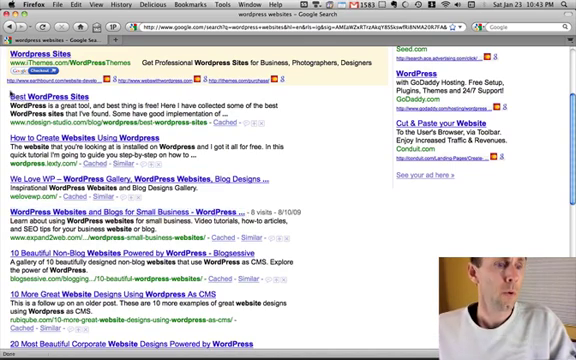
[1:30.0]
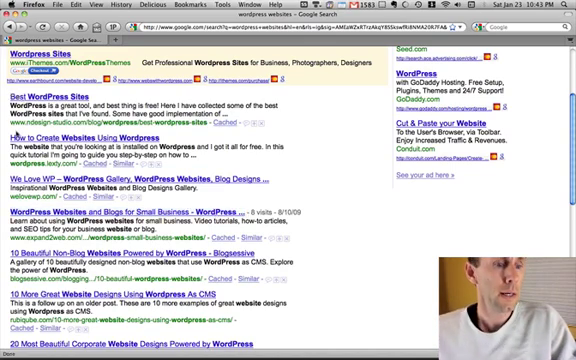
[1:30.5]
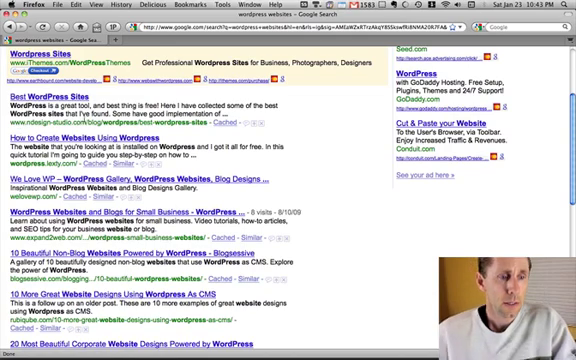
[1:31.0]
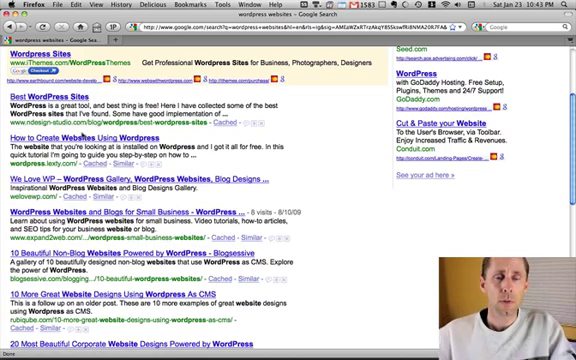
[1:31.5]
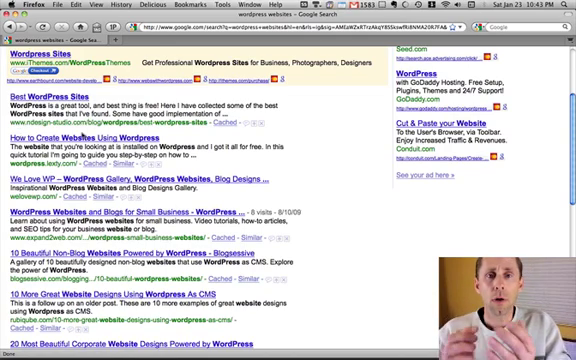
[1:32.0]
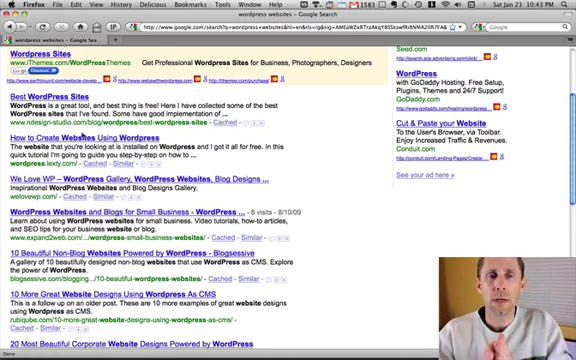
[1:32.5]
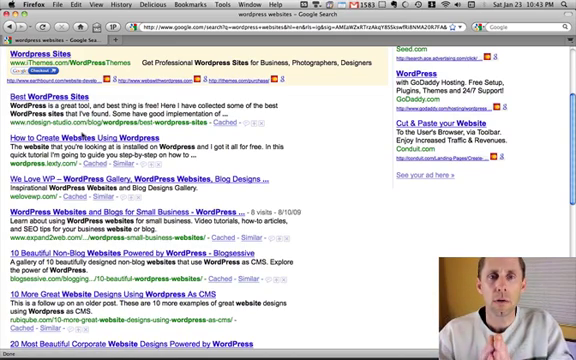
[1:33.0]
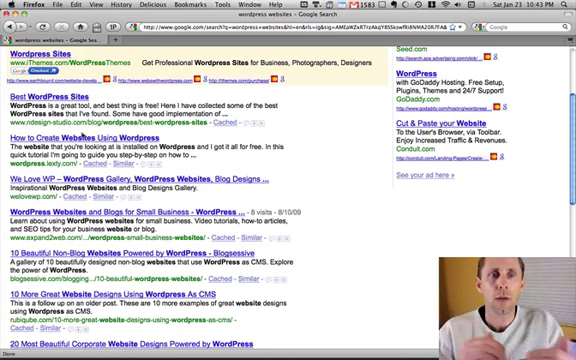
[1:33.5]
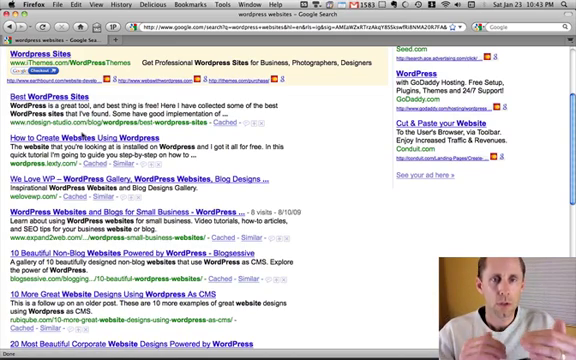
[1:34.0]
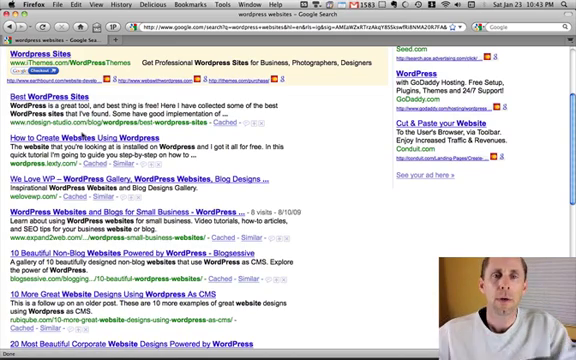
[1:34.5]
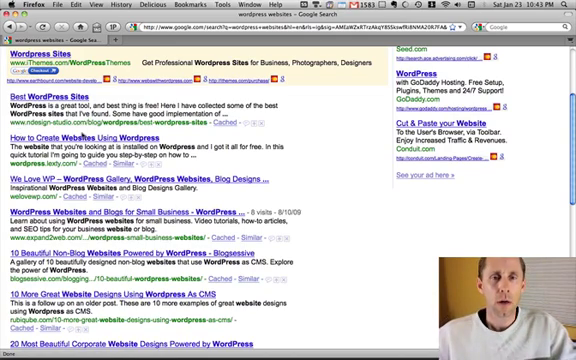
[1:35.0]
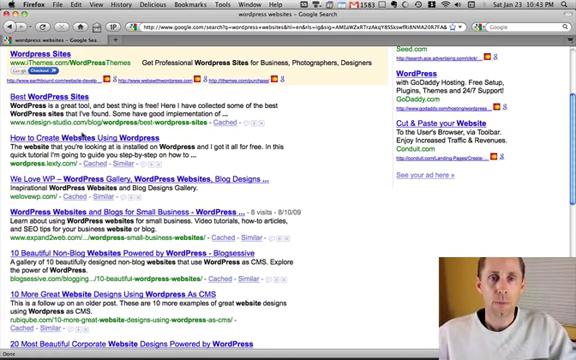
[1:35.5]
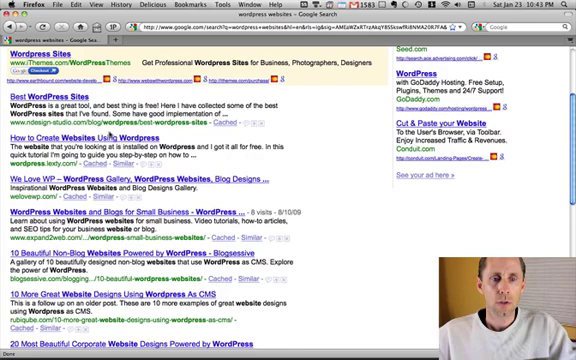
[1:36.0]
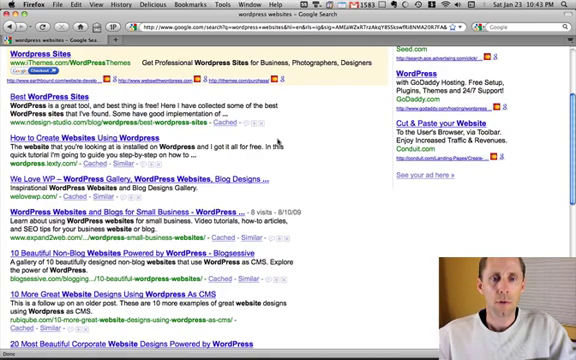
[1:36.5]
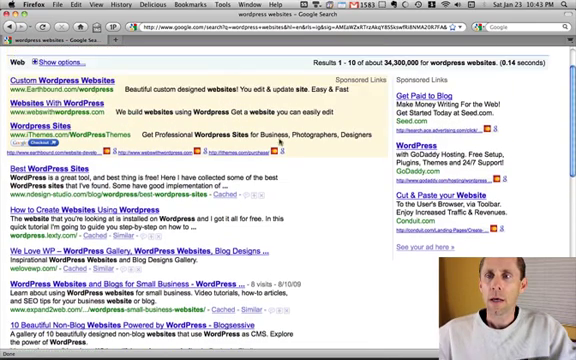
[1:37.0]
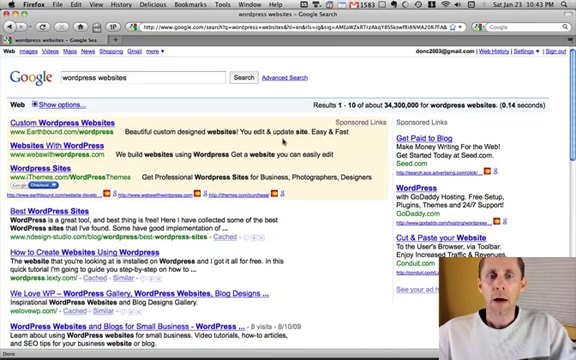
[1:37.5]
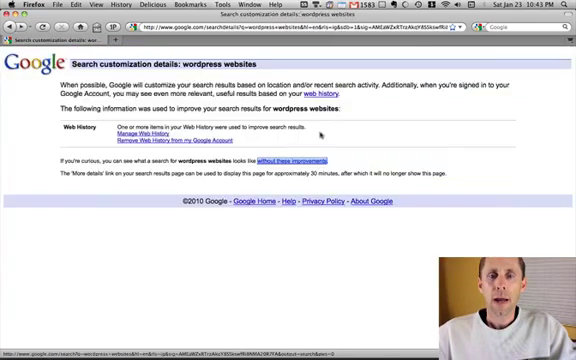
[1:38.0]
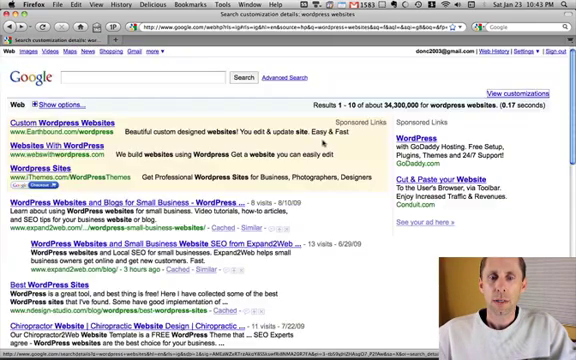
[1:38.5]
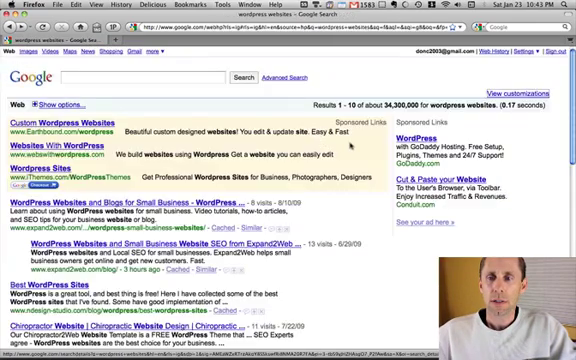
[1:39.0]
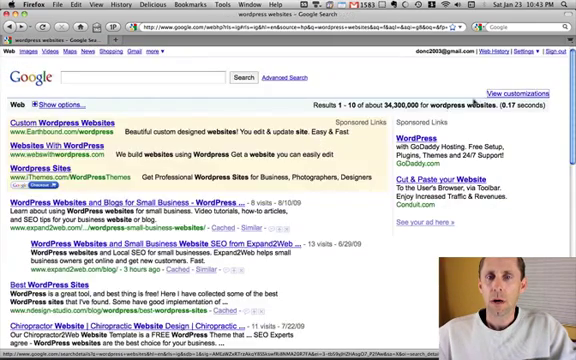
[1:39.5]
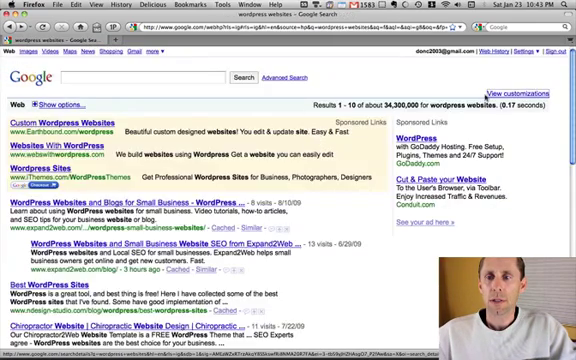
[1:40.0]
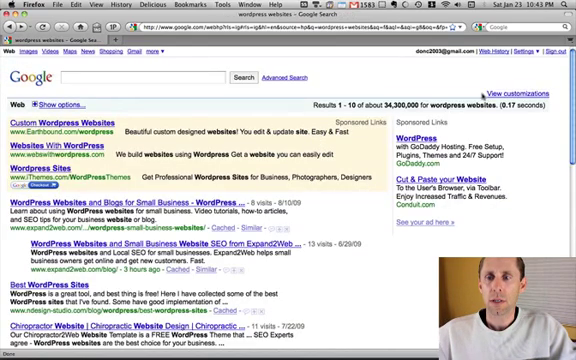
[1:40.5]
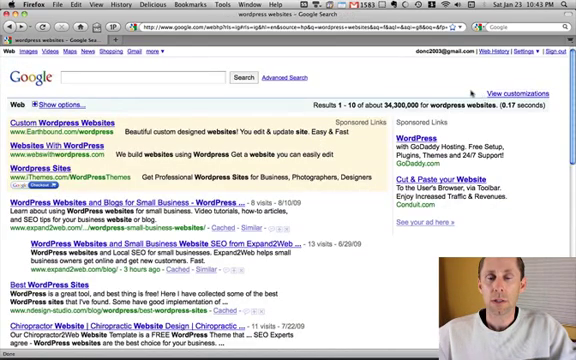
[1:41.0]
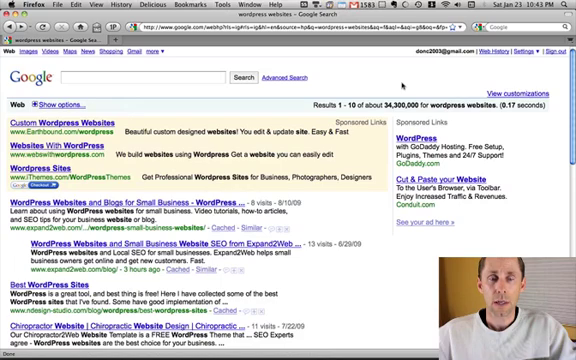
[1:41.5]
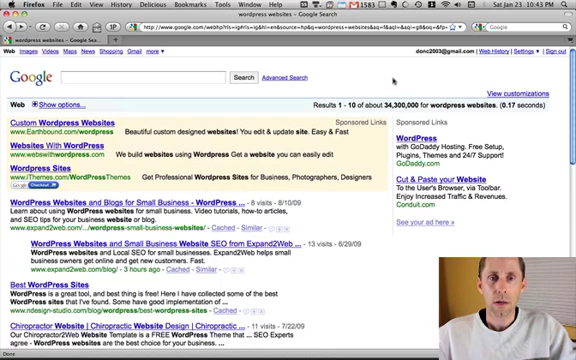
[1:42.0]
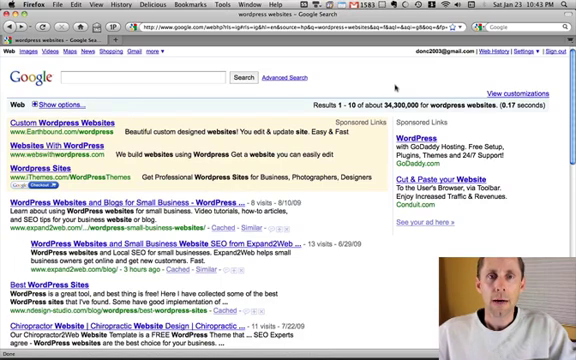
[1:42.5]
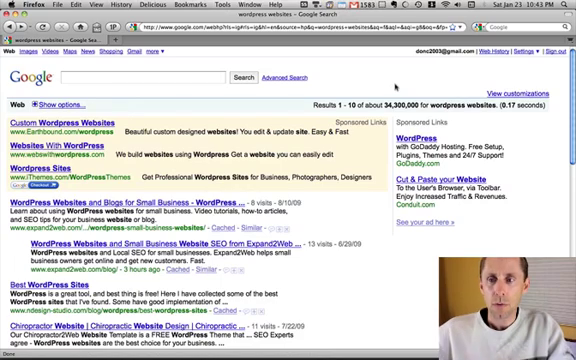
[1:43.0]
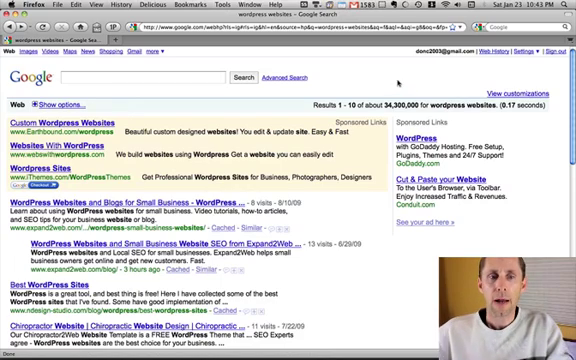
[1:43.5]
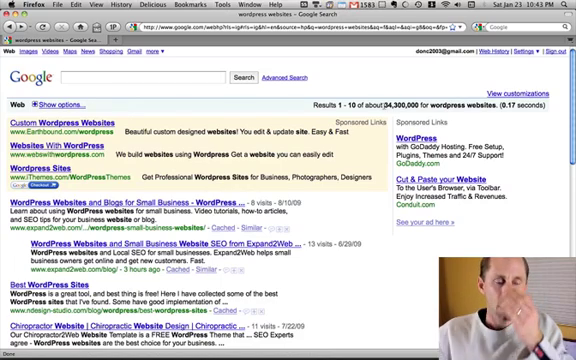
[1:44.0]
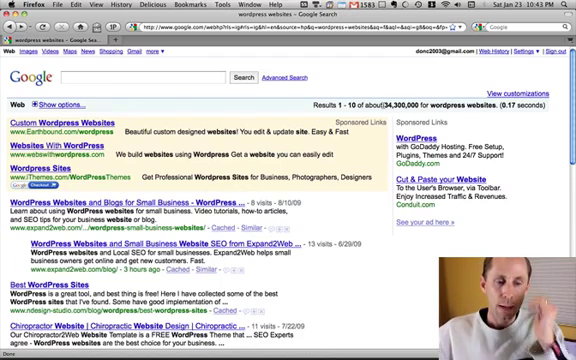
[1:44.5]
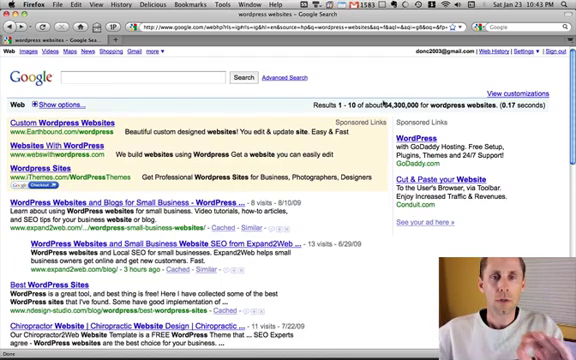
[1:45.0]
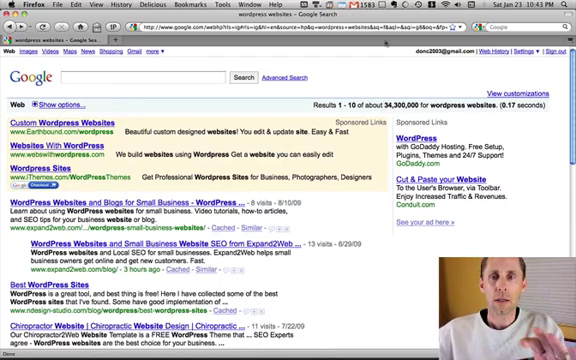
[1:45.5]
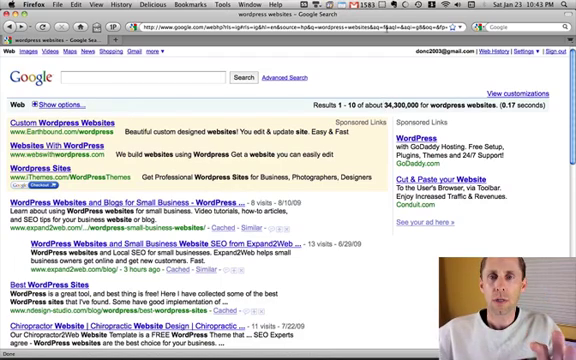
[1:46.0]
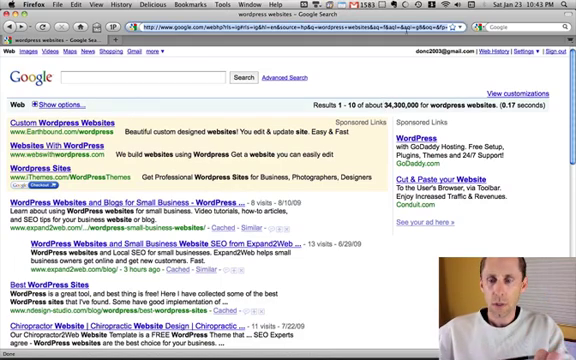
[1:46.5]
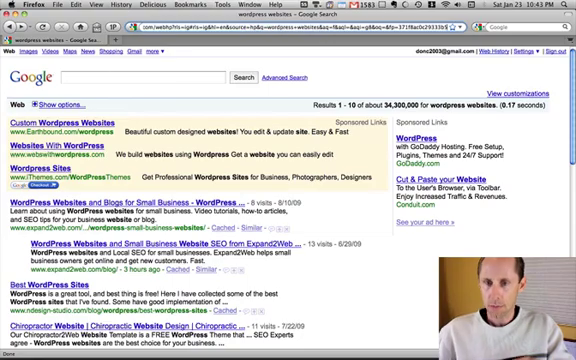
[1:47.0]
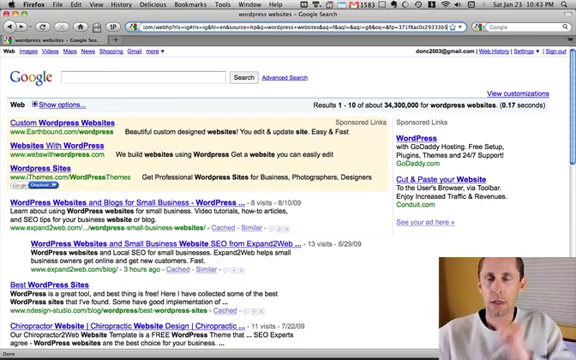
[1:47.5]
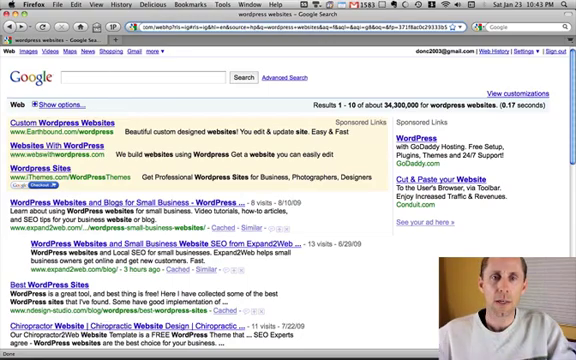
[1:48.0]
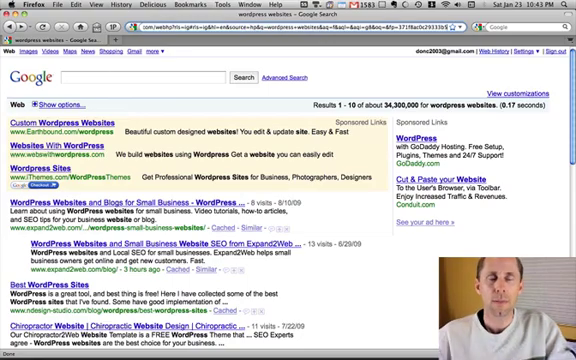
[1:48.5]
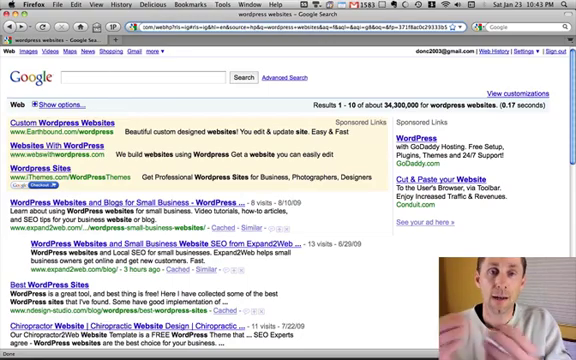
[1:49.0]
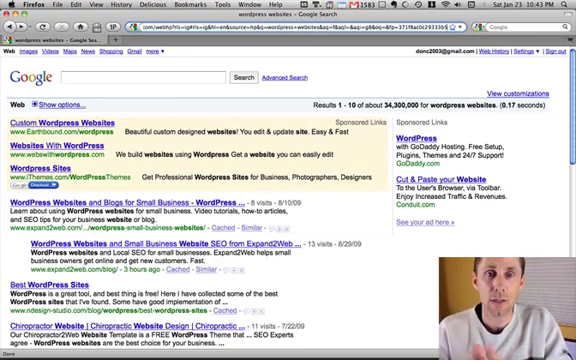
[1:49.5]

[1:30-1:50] The updated Google search results are still displayed. The man clicks through a couple of different views of the window and keeps speaking with a lot of hand gestures; at one point he wipes his brow with his hand. He does not click on any other search results. He moves the mouse erratically on the screen, then clicks on the URL as if to edit it but makes no changes. The Google page still shows sponsored links and ads at the top: the sponsored link for WordPress, which is the GoDaddy one, and an ad for the company conduit.com. There are three ads at the top: one for earthbound.com/WordPress, another for ithemes.com/WordPress themes, and a third that appears to be a generalized WordPress site ad whose web address is unreadable.